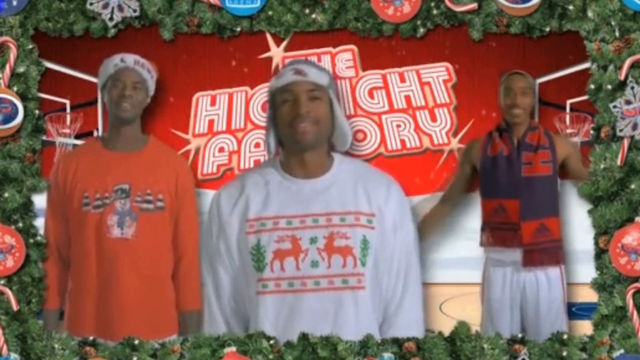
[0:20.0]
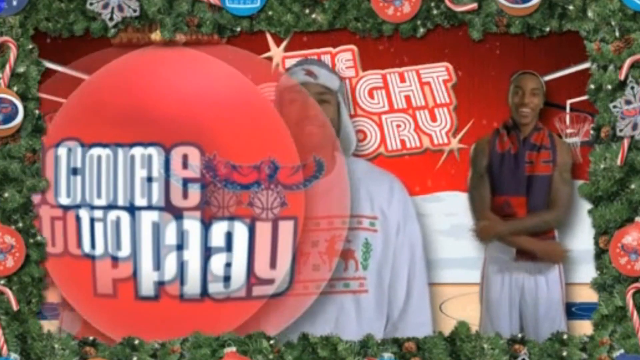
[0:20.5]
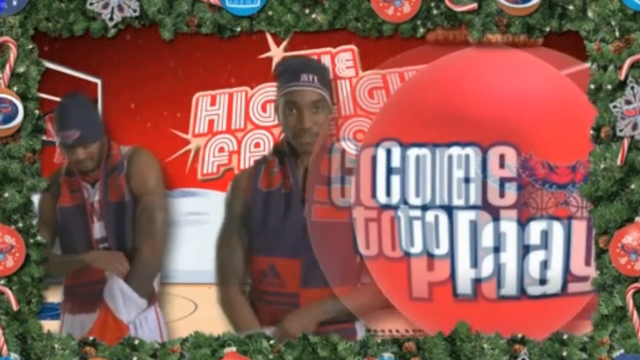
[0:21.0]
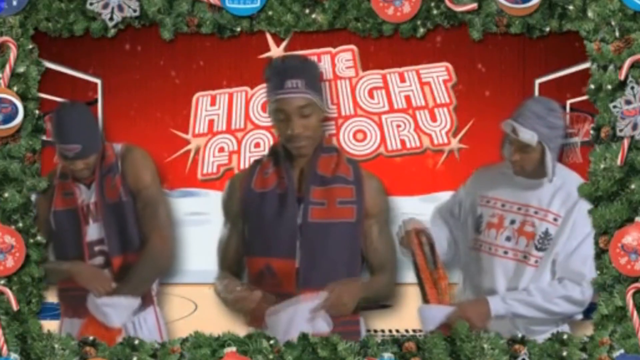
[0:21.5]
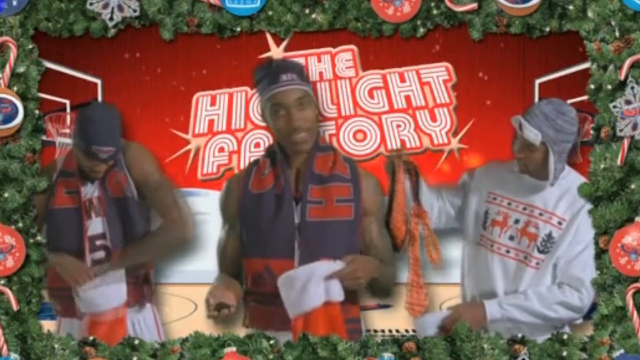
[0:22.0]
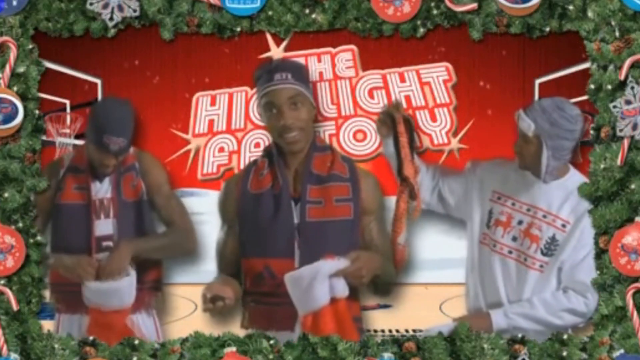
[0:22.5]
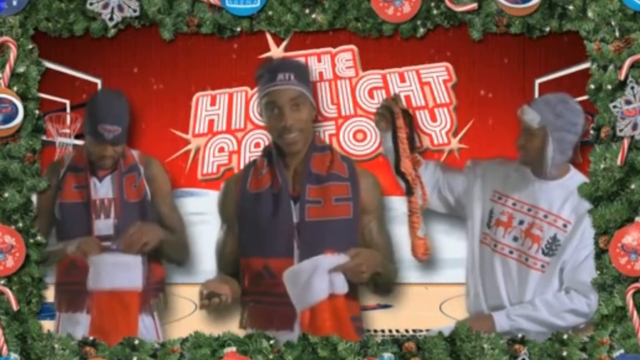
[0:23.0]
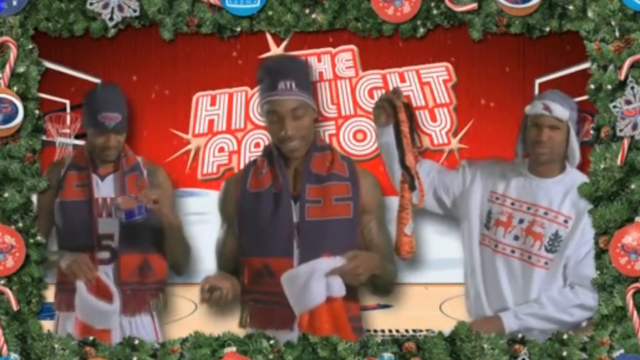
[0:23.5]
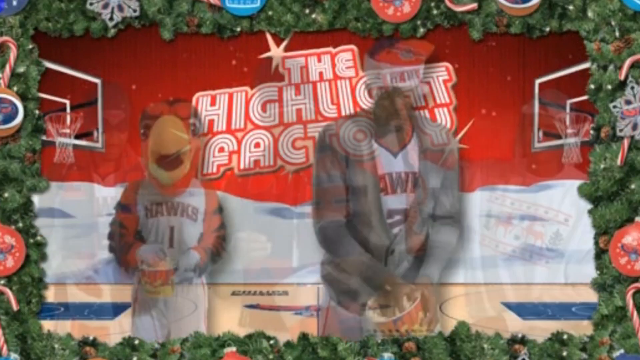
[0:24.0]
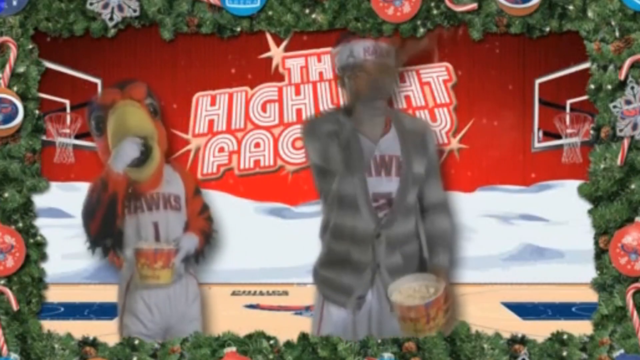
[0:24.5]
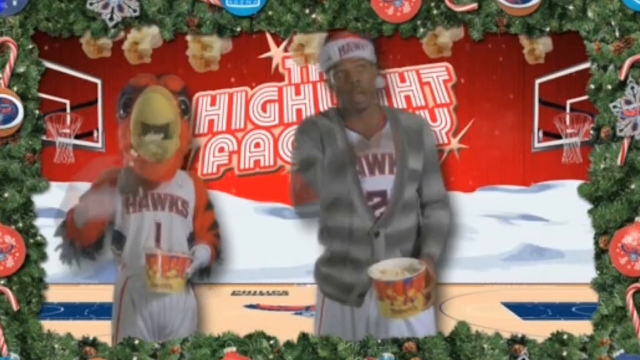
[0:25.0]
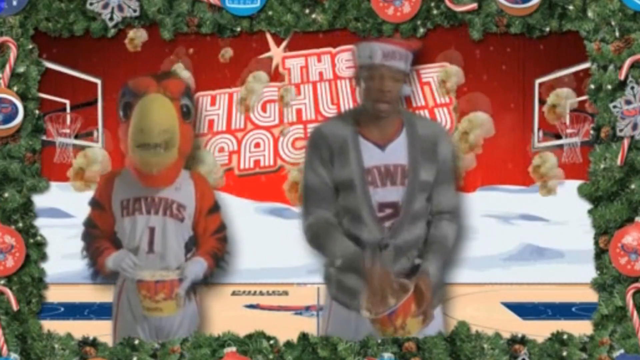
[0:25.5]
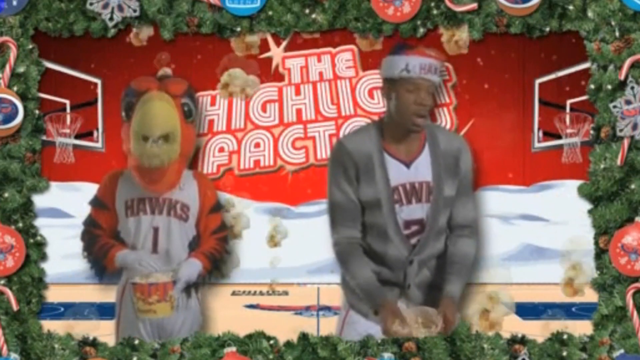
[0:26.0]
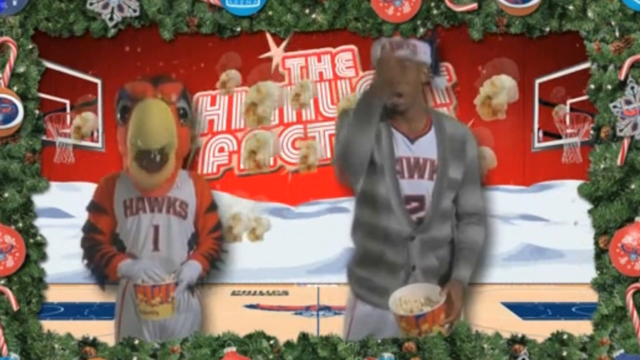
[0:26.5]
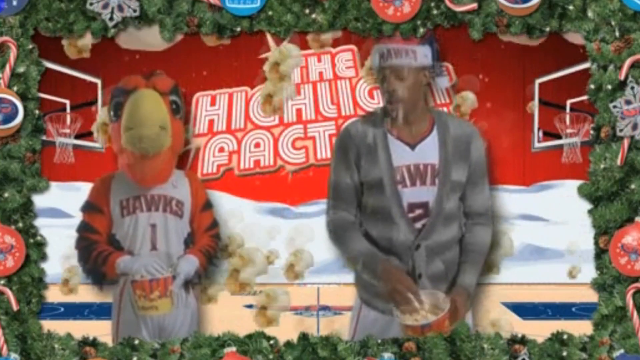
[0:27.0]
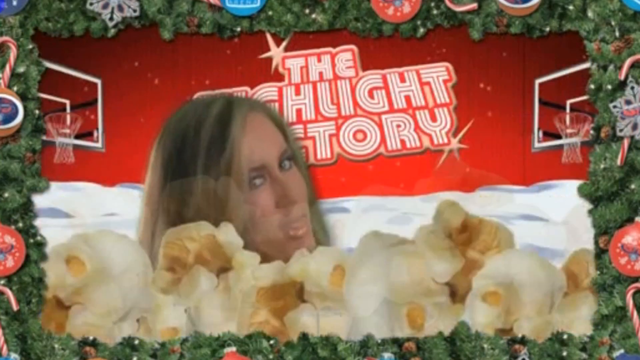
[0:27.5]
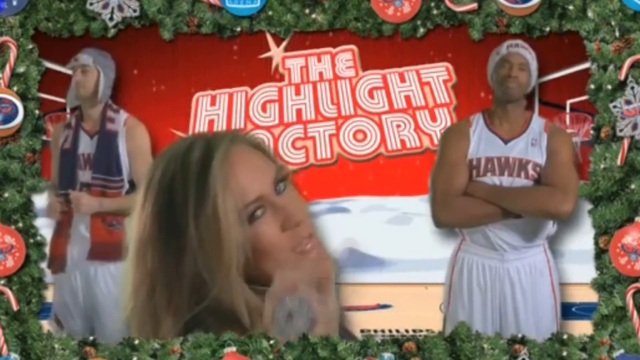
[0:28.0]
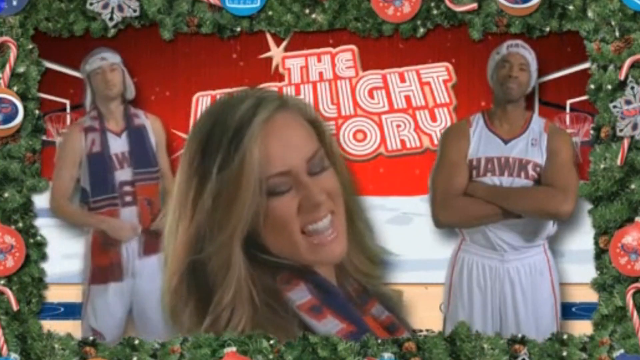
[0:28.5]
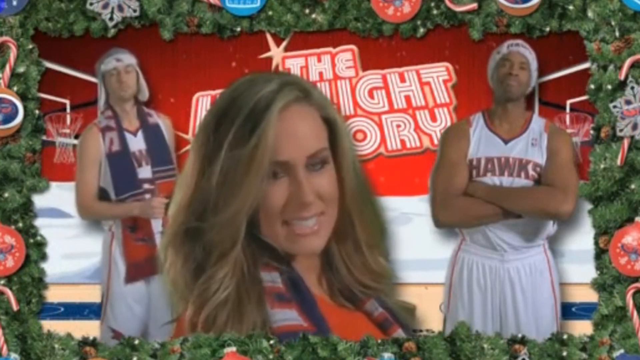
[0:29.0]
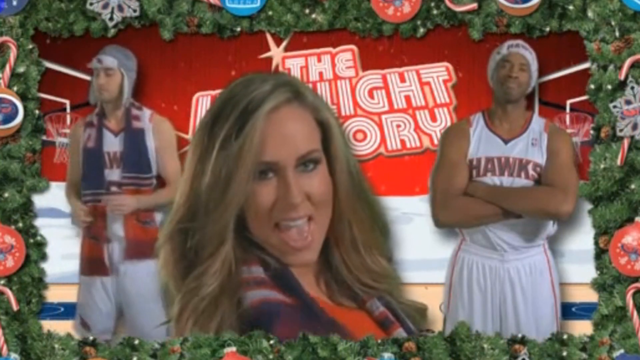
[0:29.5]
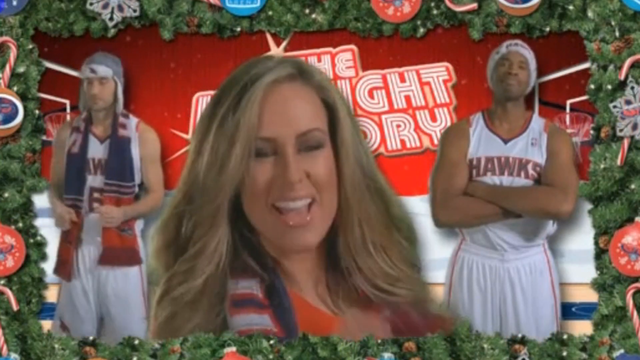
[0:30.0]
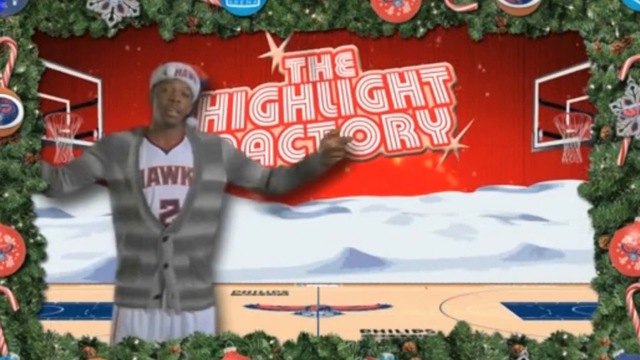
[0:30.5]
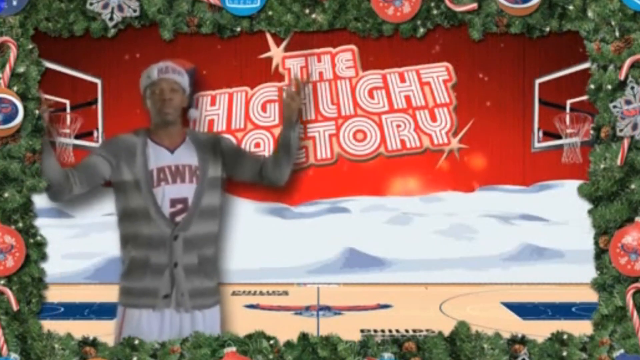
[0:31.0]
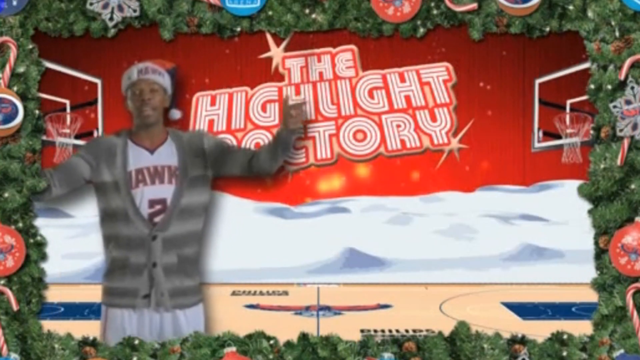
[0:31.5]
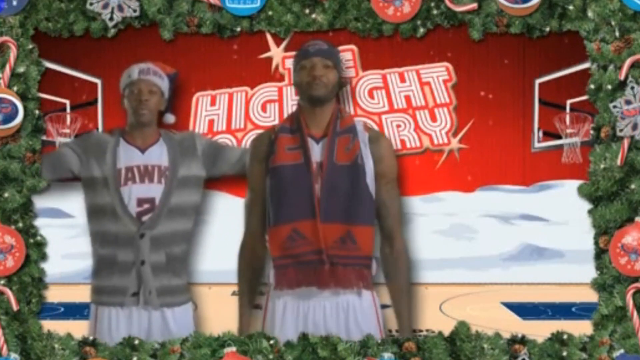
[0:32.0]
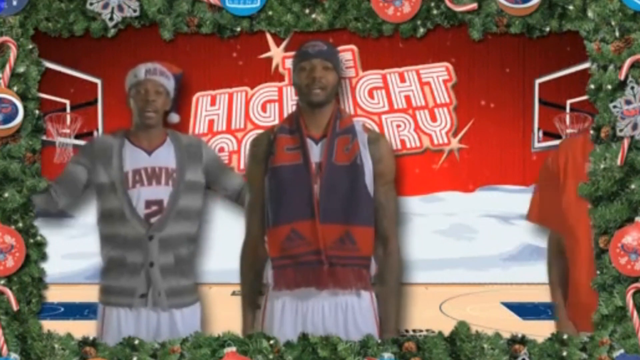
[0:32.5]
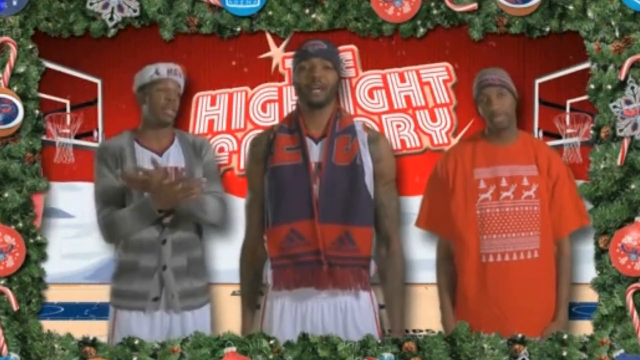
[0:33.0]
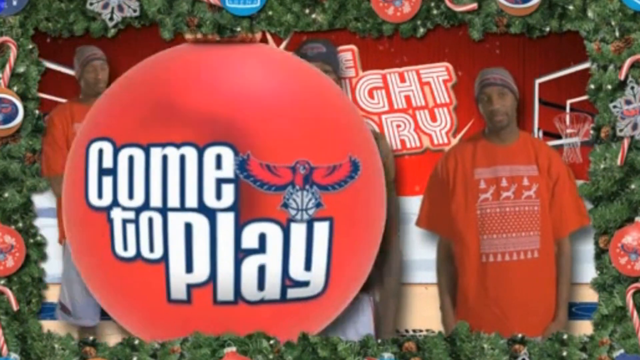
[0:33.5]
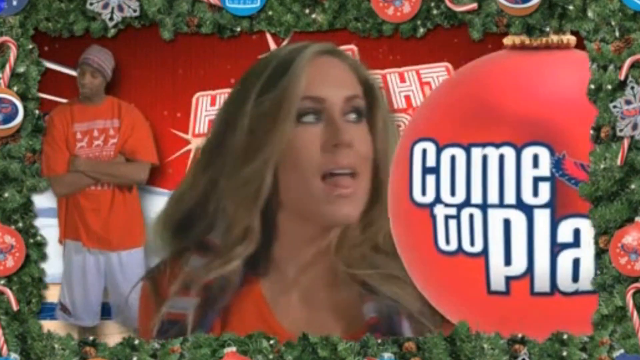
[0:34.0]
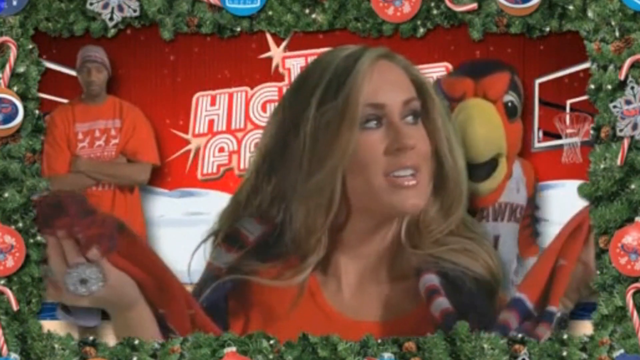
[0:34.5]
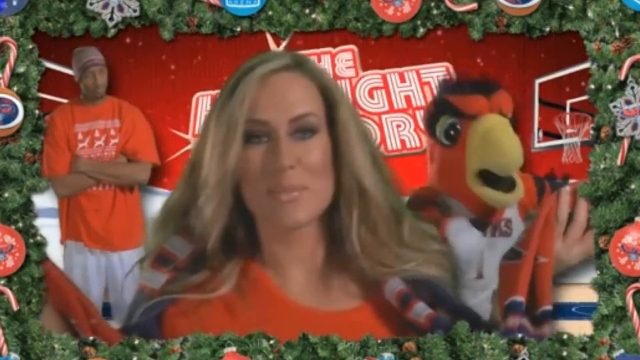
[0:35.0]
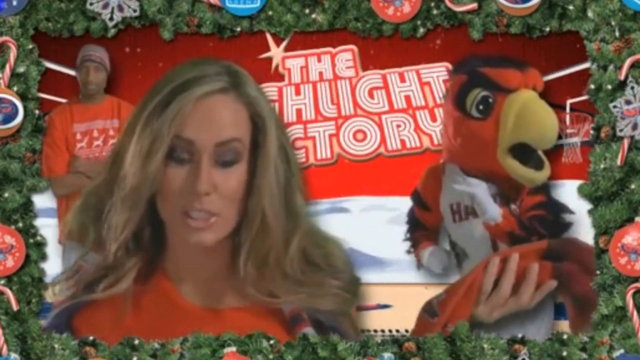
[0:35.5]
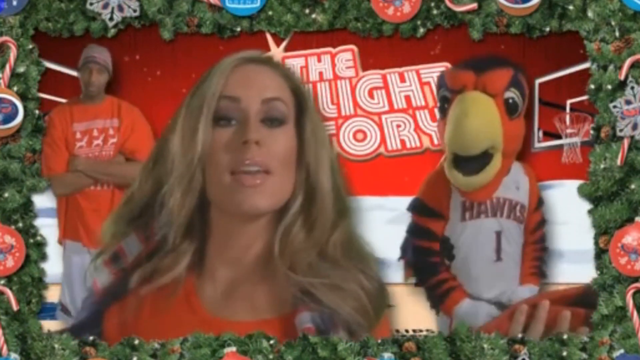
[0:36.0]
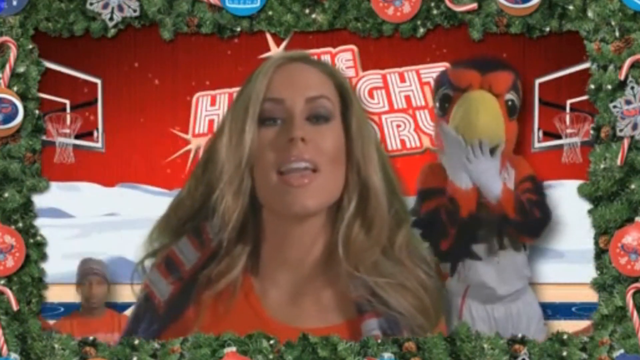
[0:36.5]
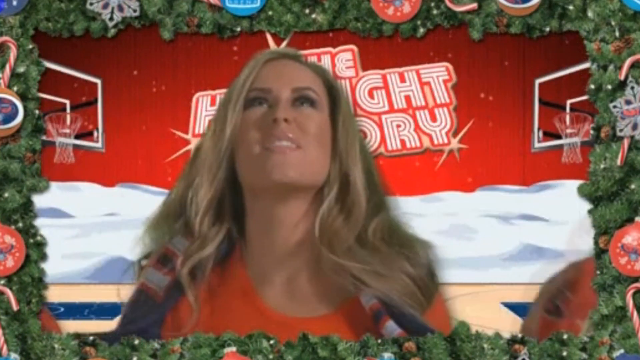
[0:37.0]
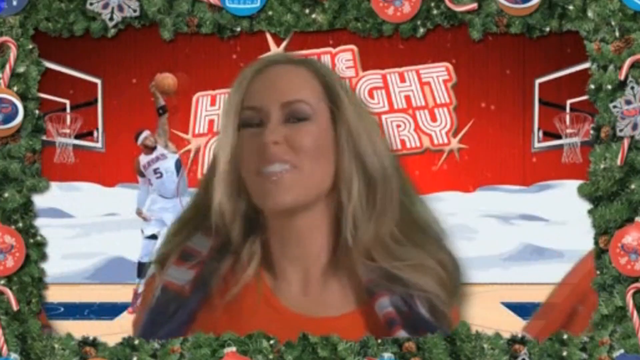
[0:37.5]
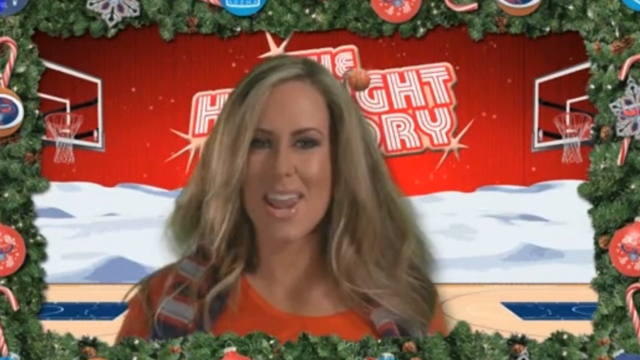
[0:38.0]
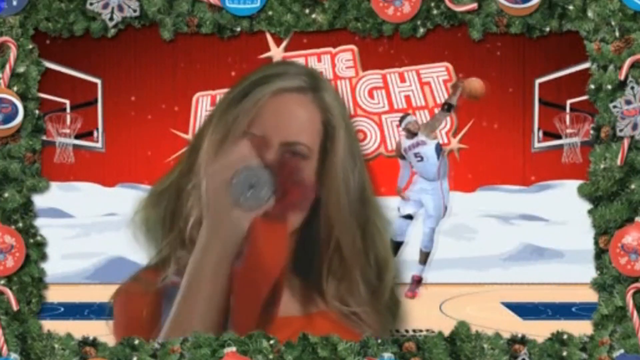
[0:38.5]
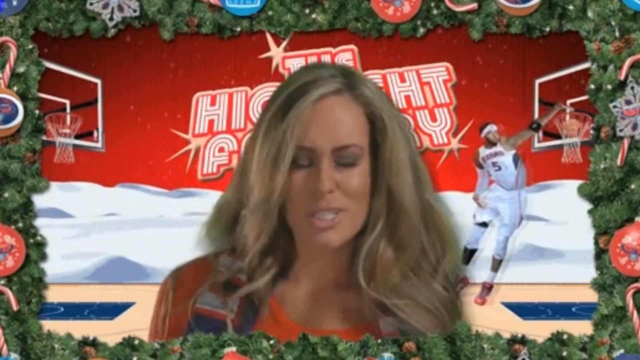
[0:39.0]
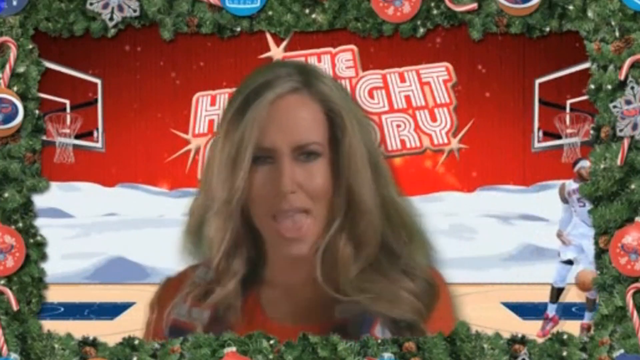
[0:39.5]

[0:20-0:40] Atlanta Hawks basketball players in themed outfits look at the camera as they pull things out of stockings, then look at the camera in a disappointed way, as if unimpressed. The video transitions to a Hawks player holding a bowl or bucket of popcorn in one hand and using the other hand to grab scoops of popcorn and throw them into the air, and animated popcorn falls across the front of the screen. A woman at the very center of the screen sings with her hands out next to her, shaking her body and moving her hands around in front of her. Various people appear; some kind of sway and sing along, while others hold their hands out to their sides and move them around. A sign at the very back reads "the Highlight Factory", and there is a basketball goal on the right and on the left in the background.